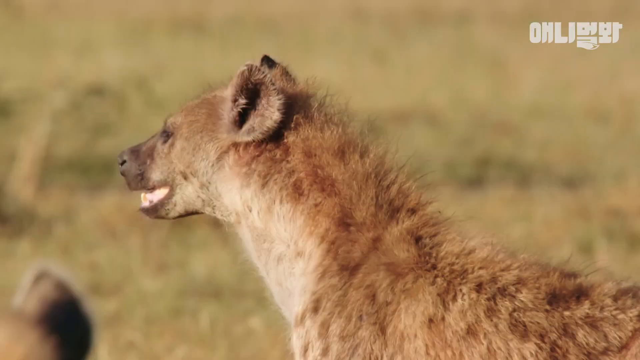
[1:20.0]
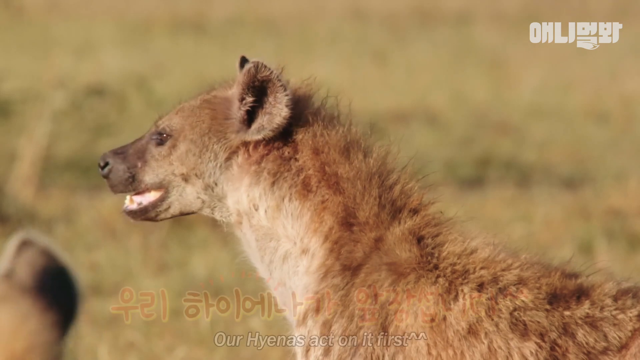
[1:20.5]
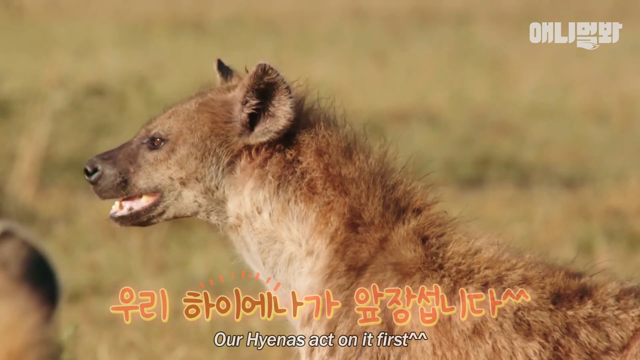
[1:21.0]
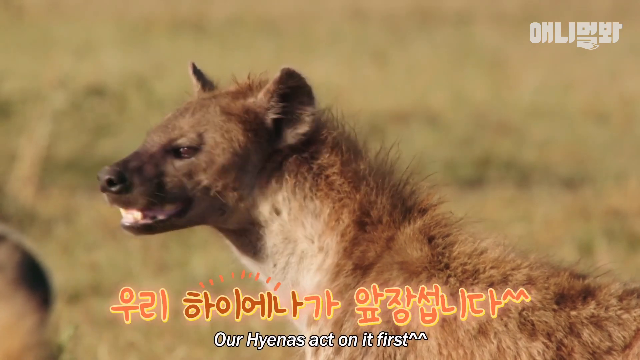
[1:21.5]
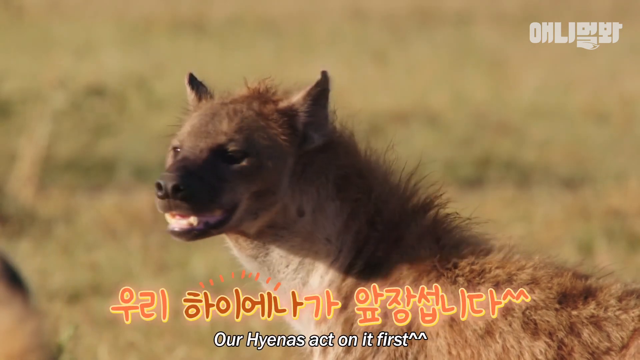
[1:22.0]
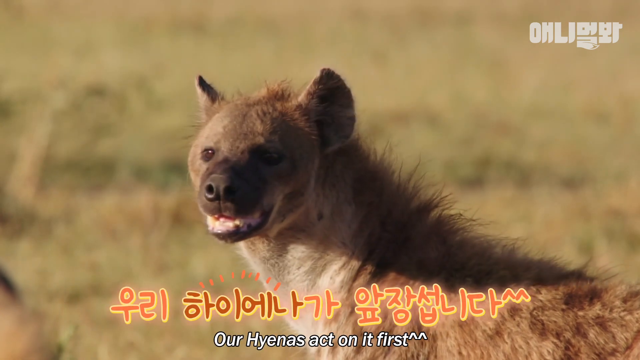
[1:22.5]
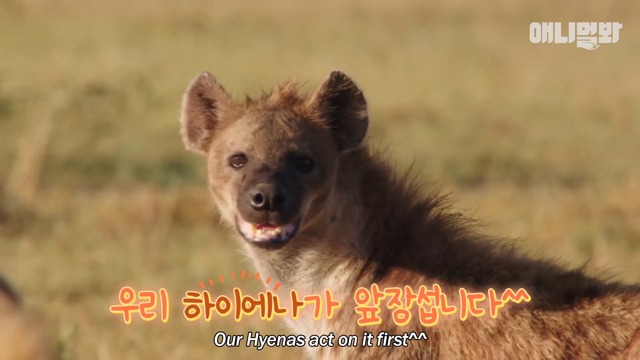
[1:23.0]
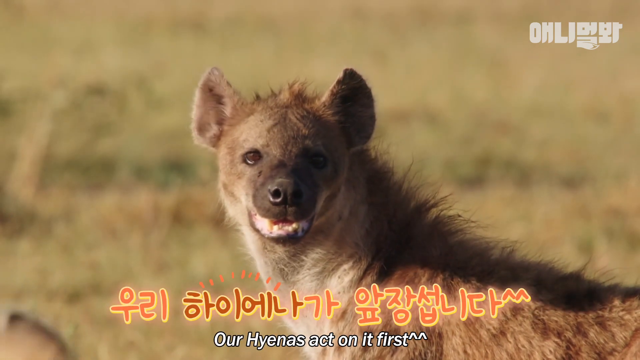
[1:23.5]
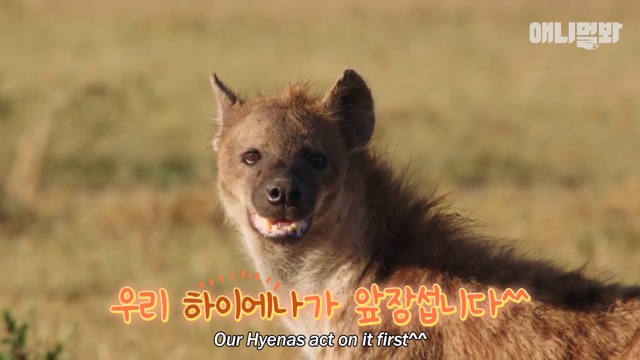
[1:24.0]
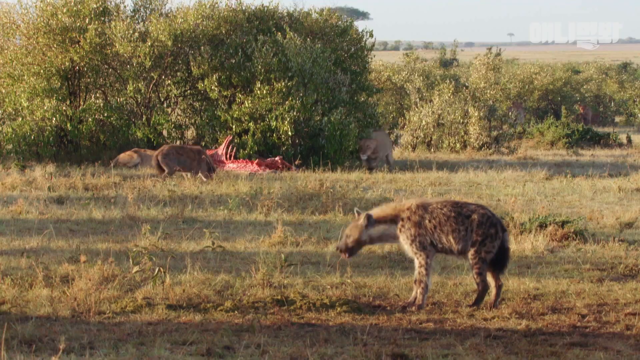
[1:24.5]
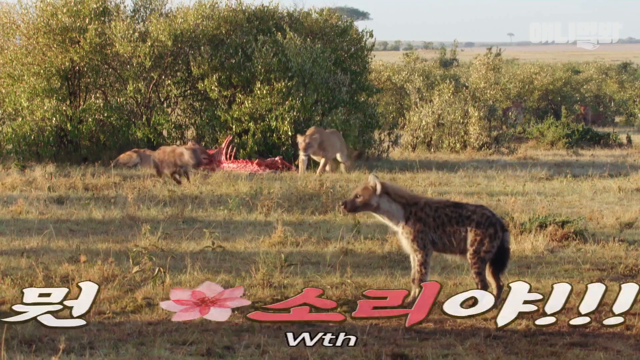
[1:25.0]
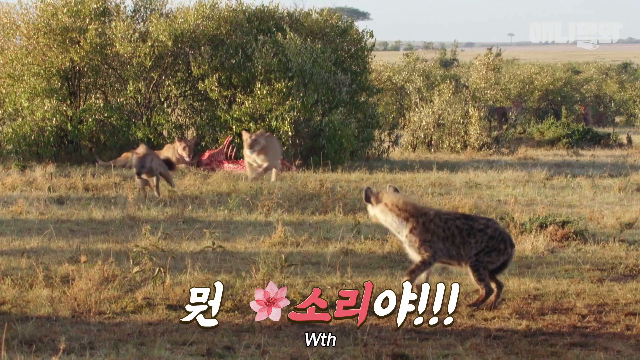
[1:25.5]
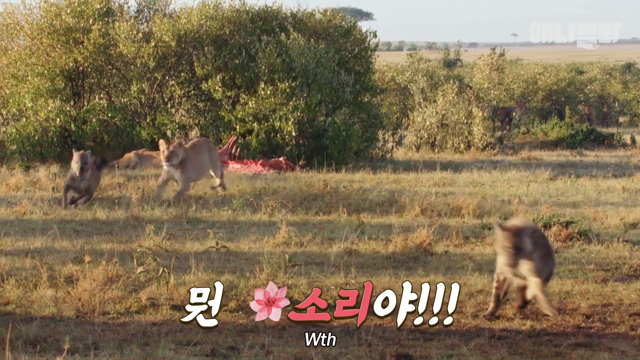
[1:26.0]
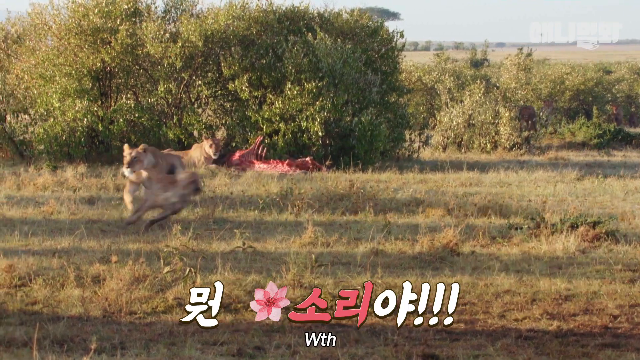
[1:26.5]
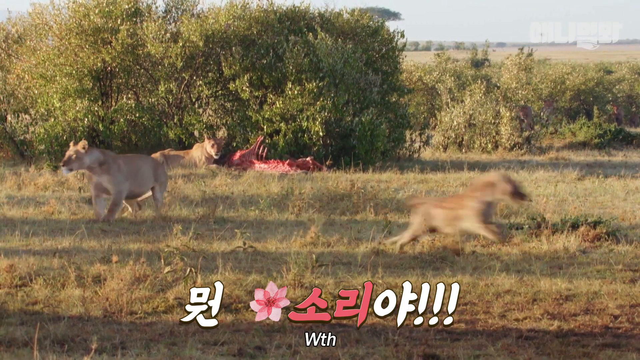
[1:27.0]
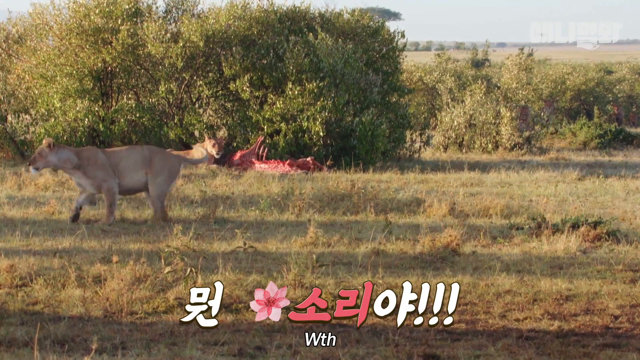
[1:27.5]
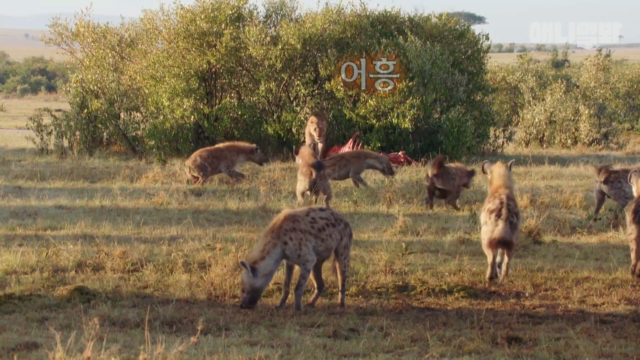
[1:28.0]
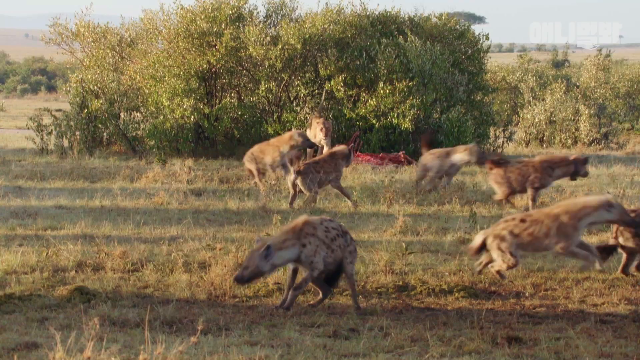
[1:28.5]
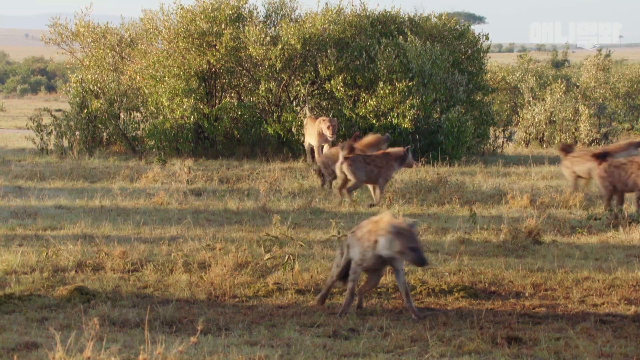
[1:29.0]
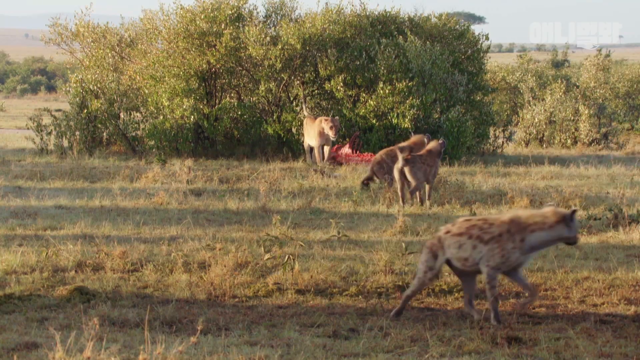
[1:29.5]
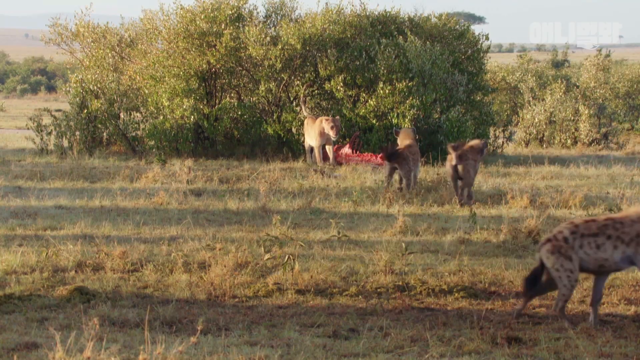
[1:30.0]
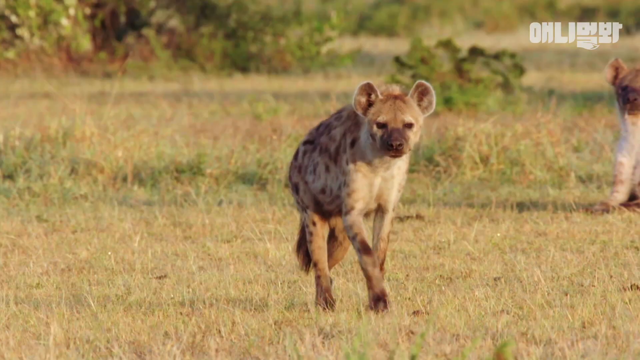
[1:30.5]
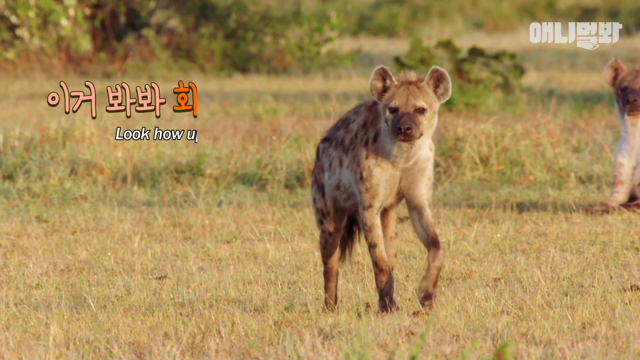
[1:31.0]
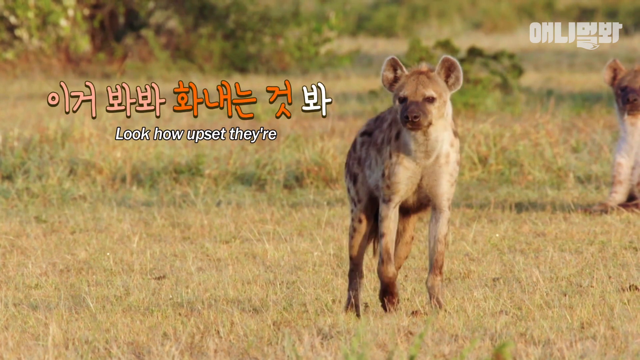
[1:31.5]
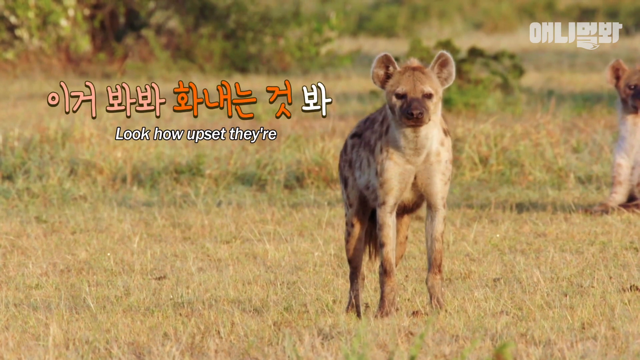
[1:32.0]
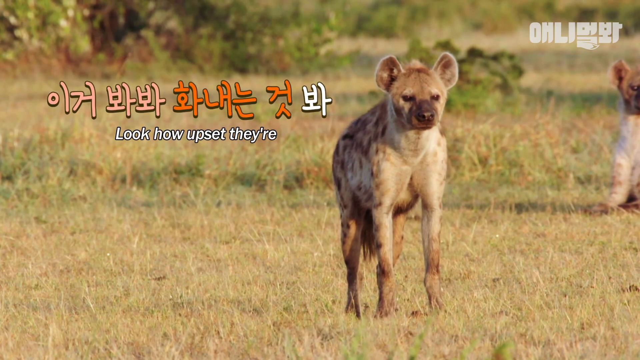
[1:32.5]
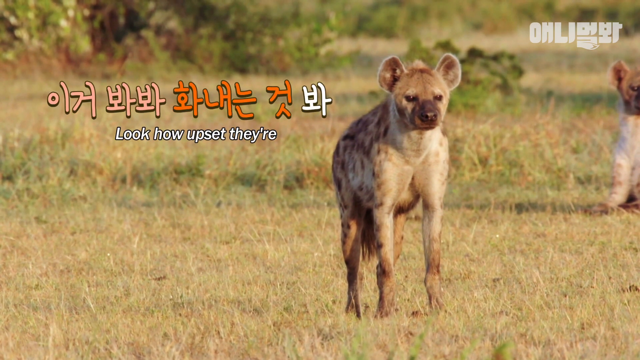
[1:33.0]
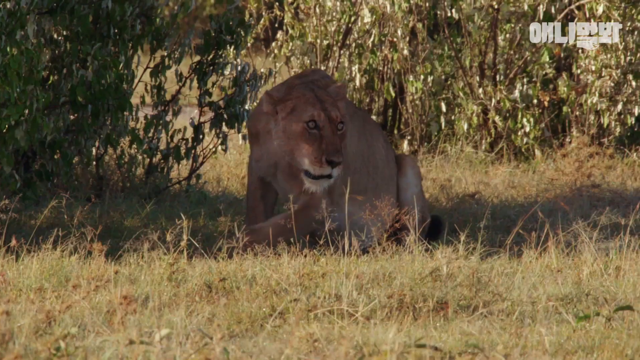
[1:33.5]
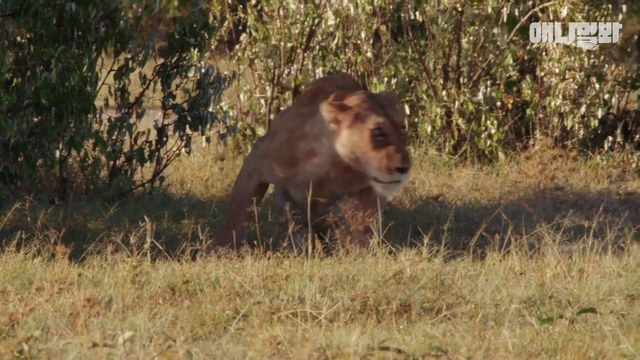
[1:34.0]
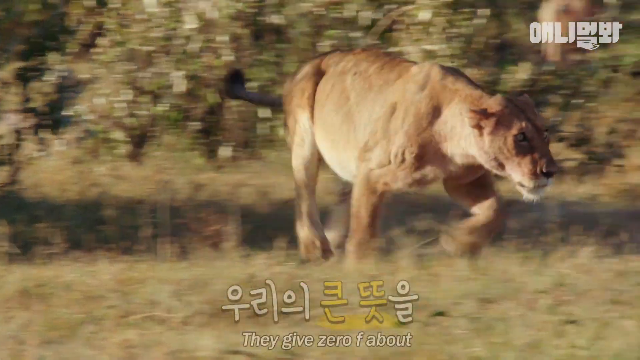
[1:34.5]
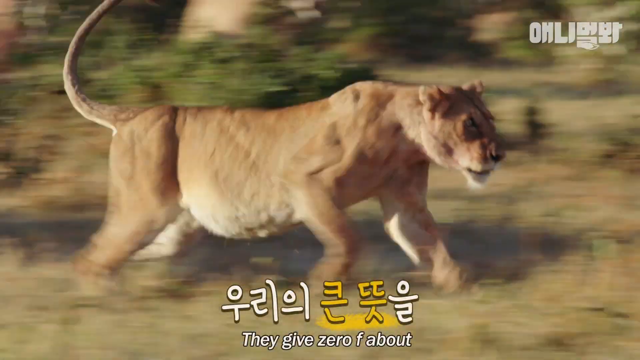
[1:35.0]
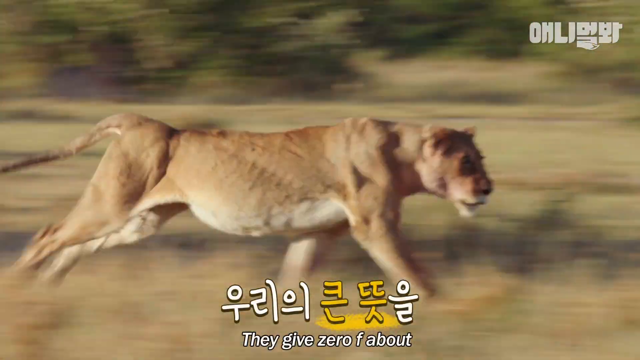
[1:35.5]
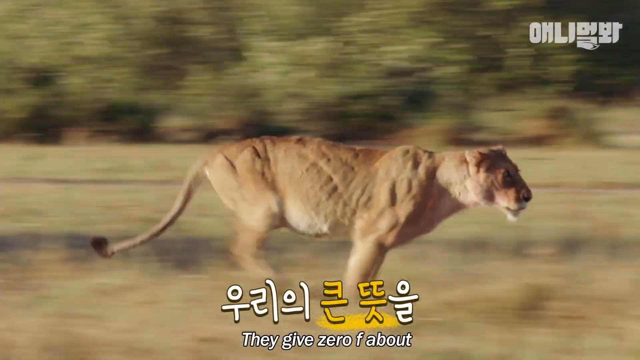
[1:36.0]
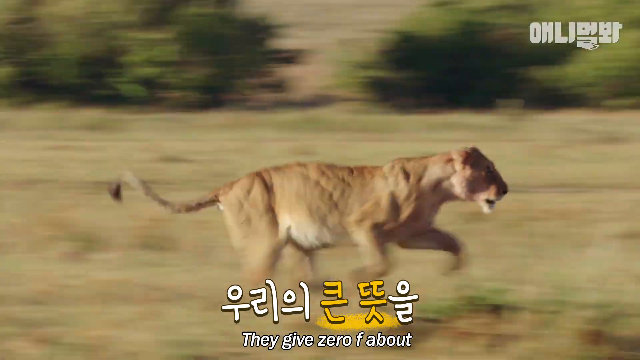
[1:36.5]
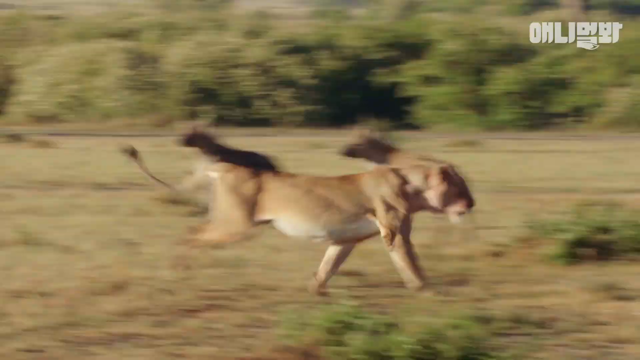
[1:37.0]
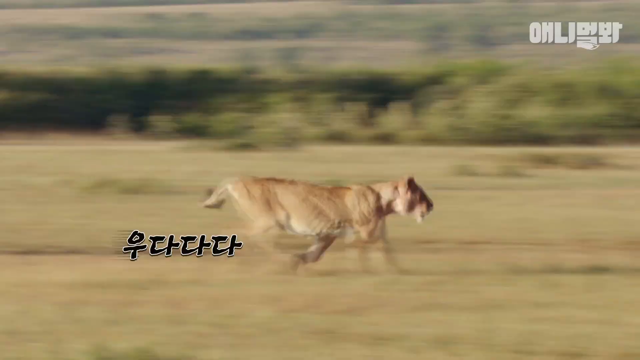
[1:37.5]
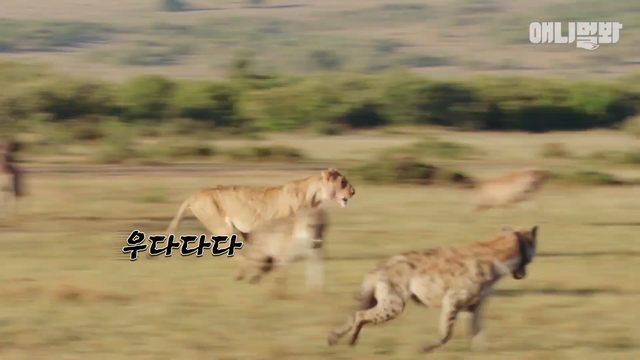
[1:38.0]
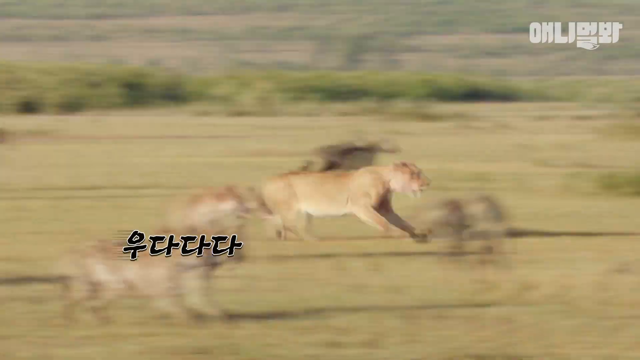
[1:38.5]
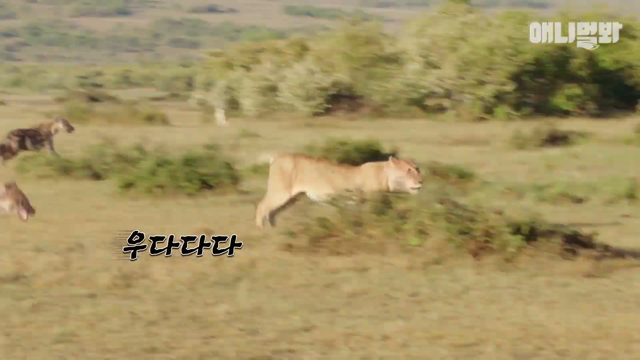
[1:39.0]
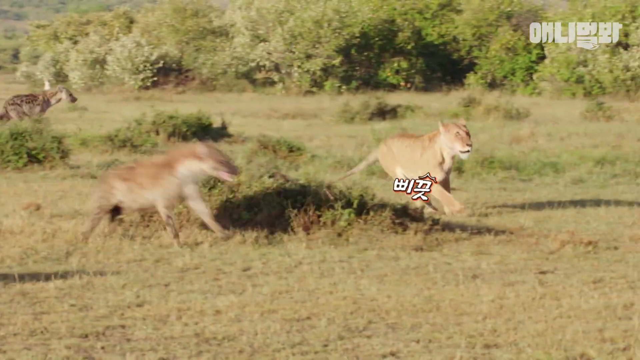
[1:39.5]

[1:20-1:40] The lioness that dragged the carcass into the bush has reacted, startling the hyenas, which appear more numerous now, roughly five to seven. She appears to pursue the hyenas, going through some of her own pride as she chases them. The captions seem to indicate that the hyenas are insulting and mocking the lioness, apparently egging her on to pursue them.